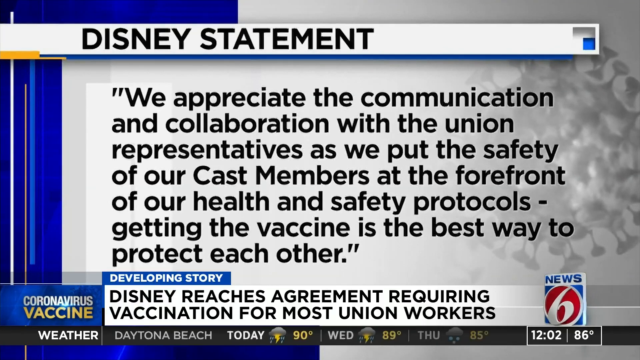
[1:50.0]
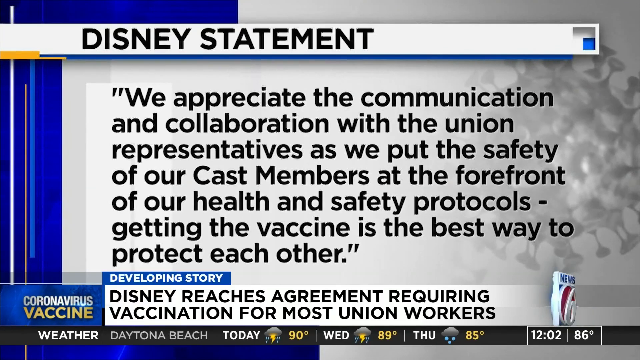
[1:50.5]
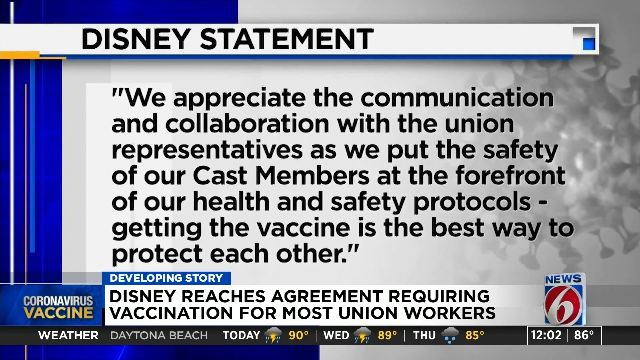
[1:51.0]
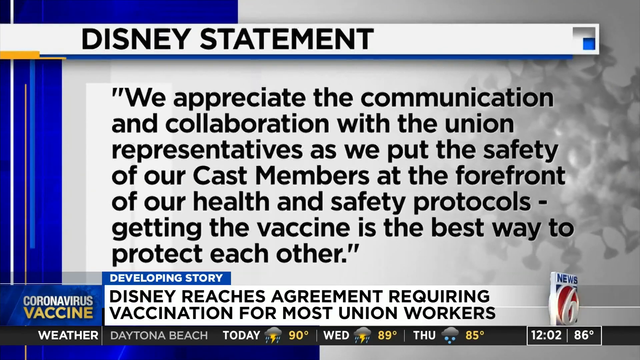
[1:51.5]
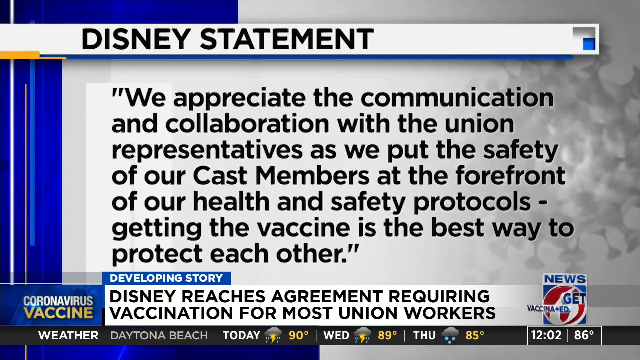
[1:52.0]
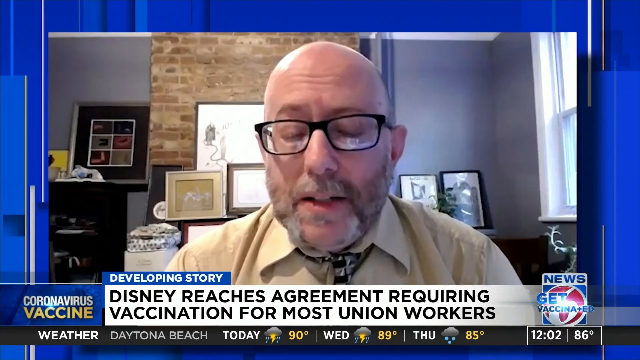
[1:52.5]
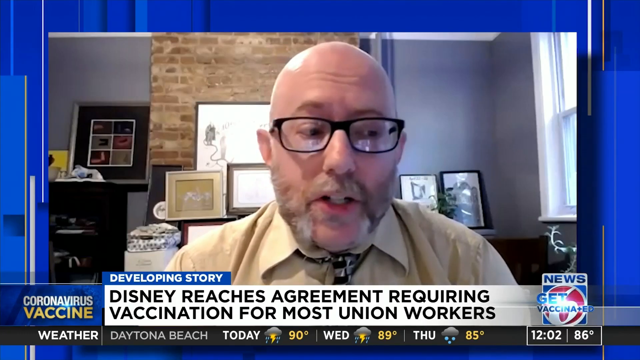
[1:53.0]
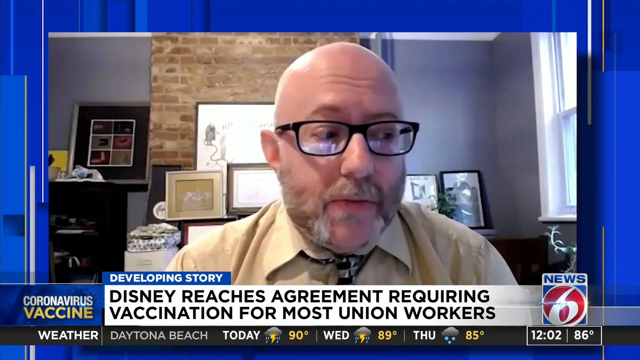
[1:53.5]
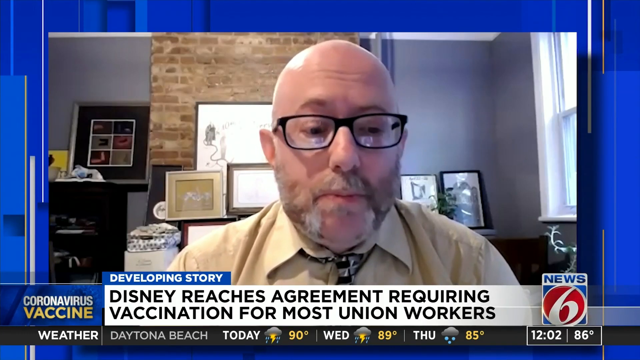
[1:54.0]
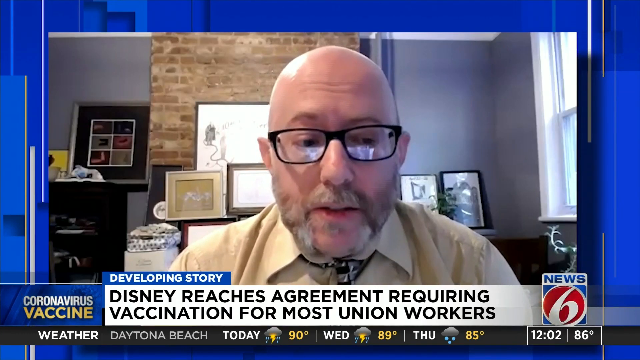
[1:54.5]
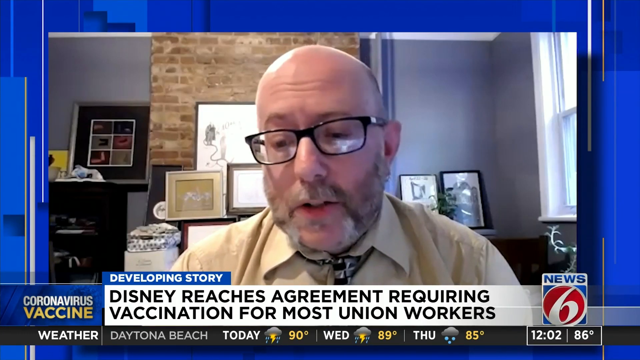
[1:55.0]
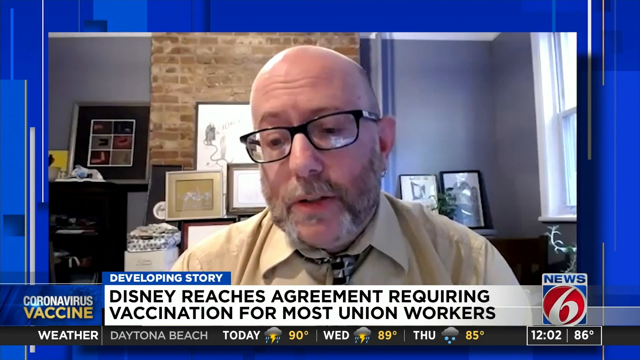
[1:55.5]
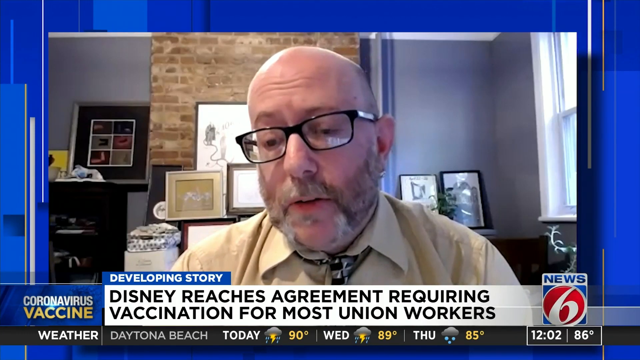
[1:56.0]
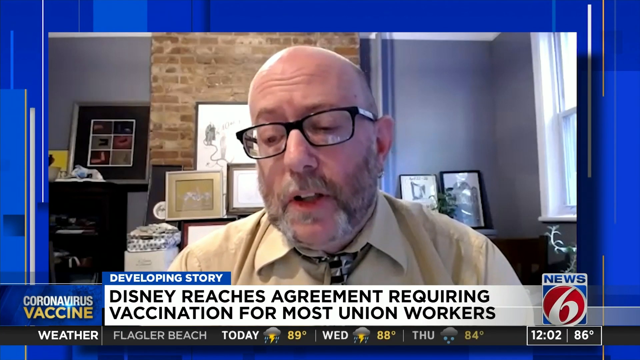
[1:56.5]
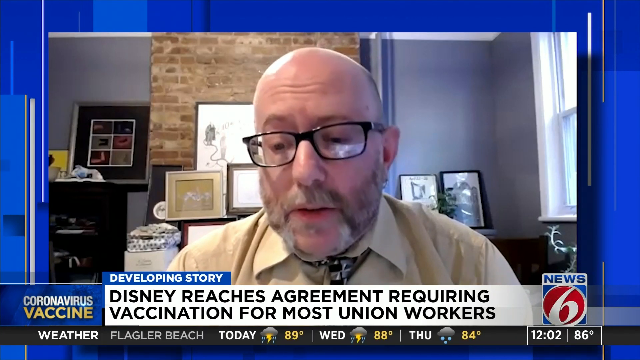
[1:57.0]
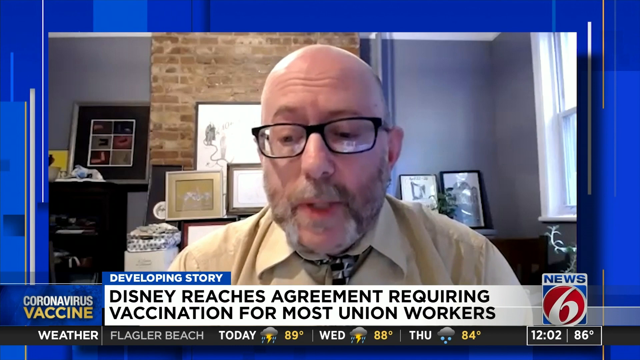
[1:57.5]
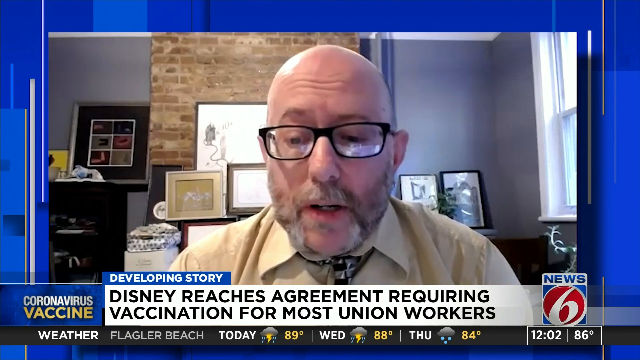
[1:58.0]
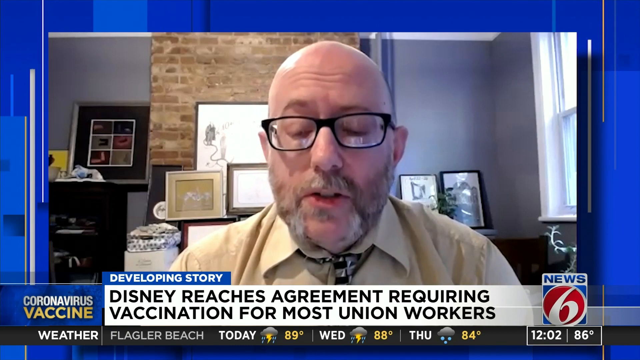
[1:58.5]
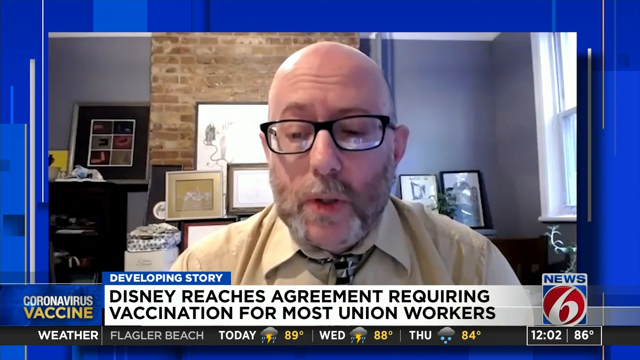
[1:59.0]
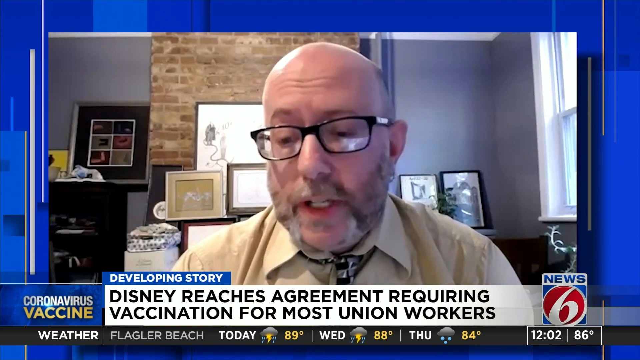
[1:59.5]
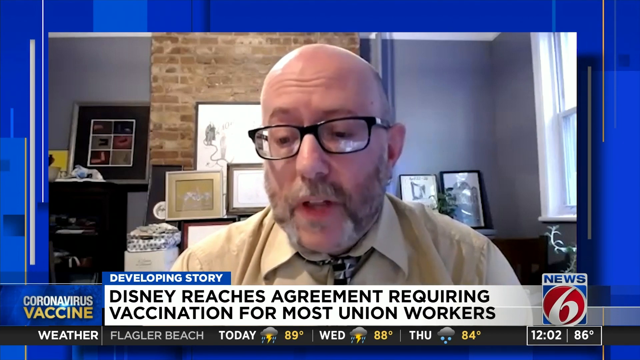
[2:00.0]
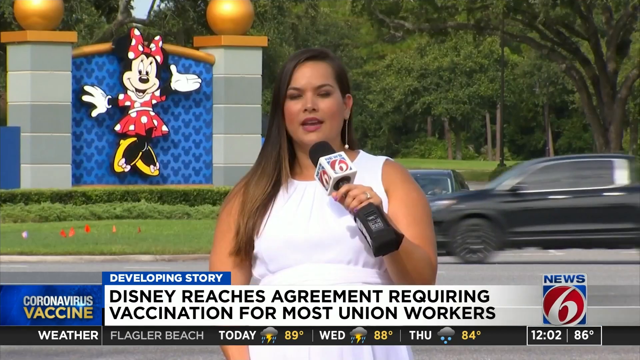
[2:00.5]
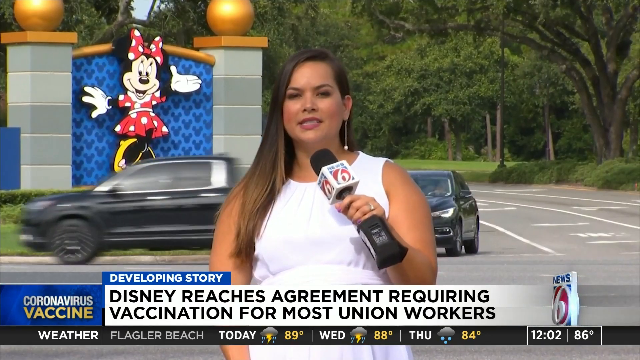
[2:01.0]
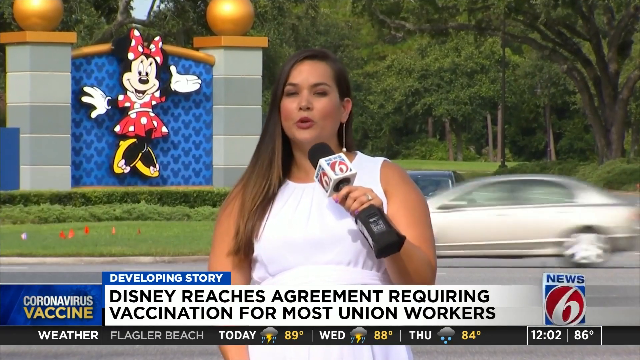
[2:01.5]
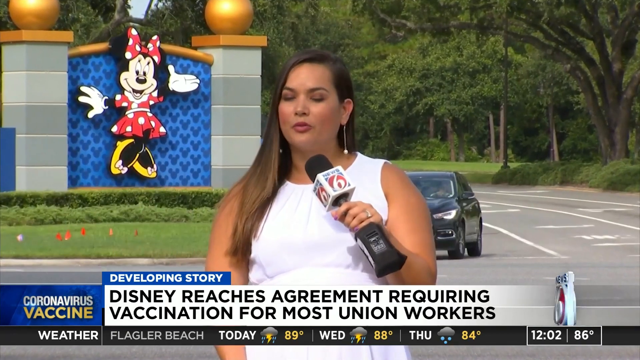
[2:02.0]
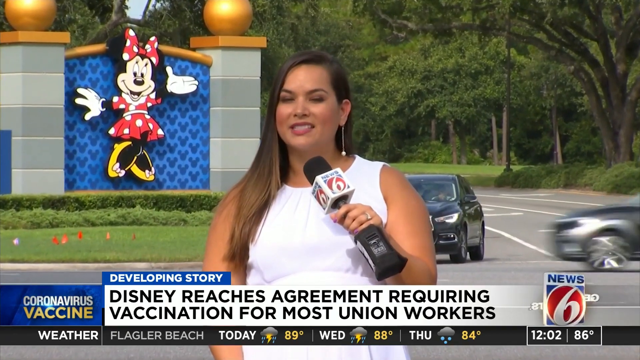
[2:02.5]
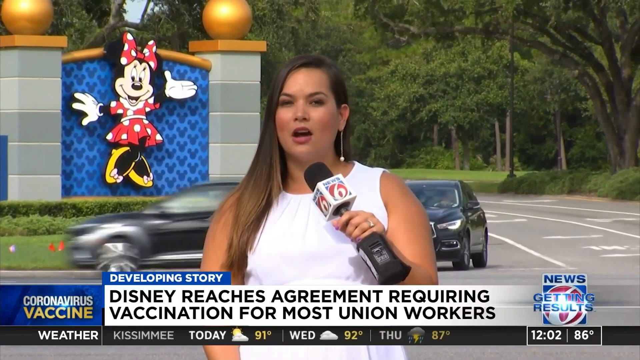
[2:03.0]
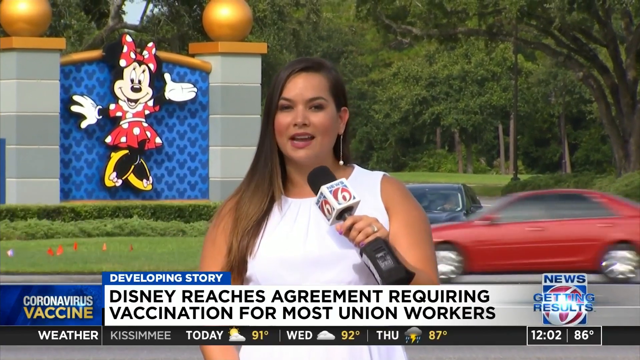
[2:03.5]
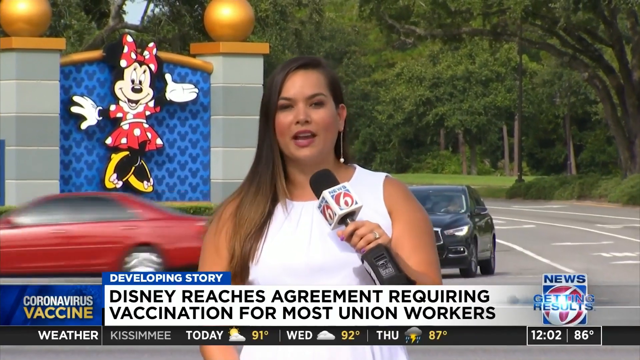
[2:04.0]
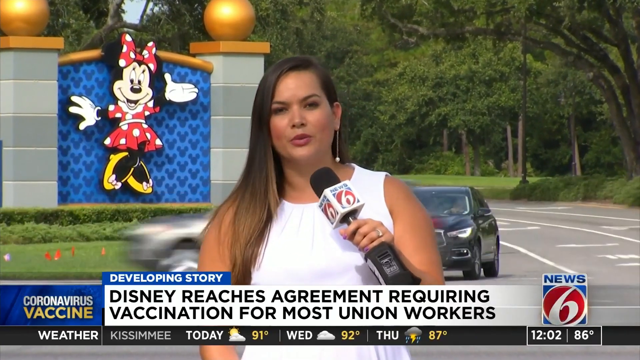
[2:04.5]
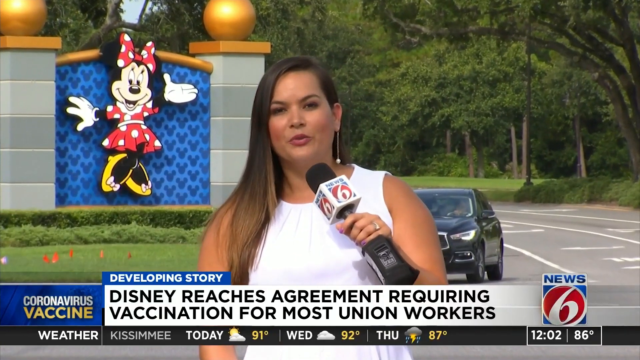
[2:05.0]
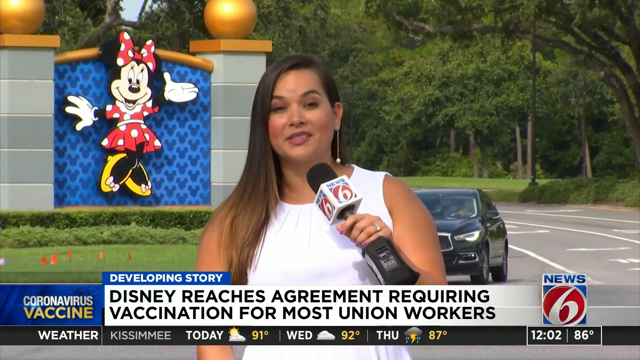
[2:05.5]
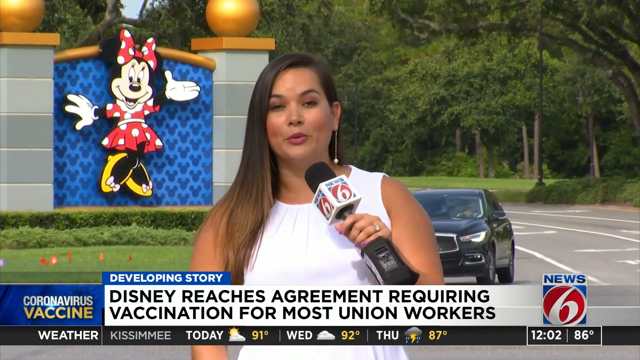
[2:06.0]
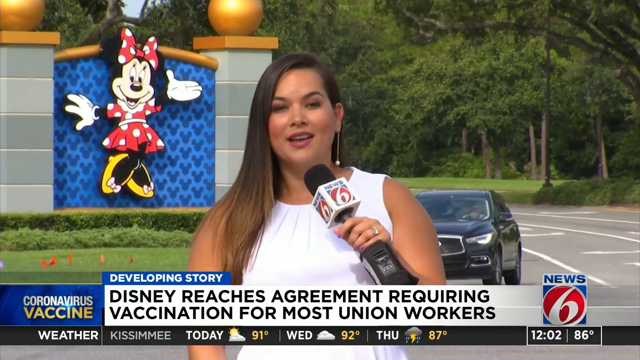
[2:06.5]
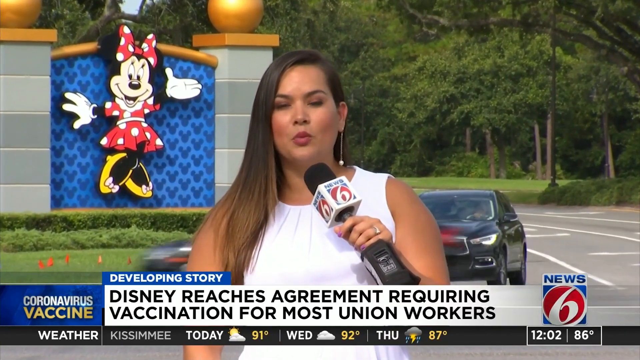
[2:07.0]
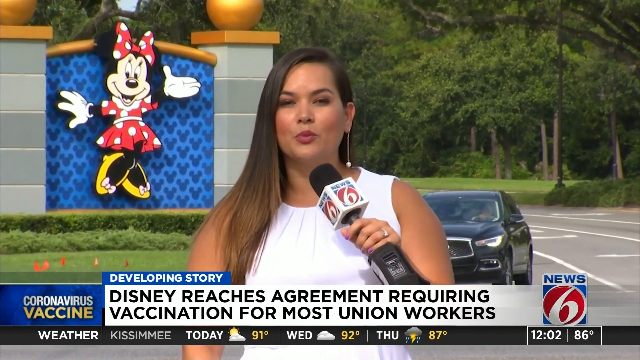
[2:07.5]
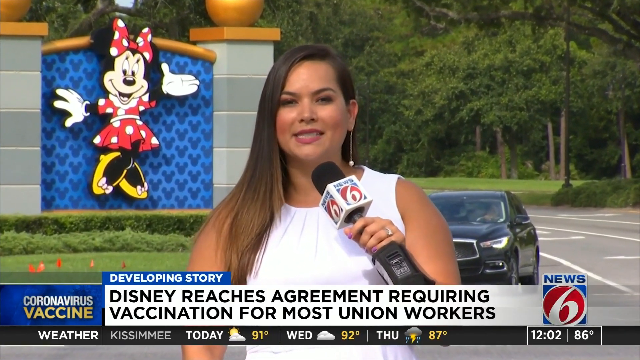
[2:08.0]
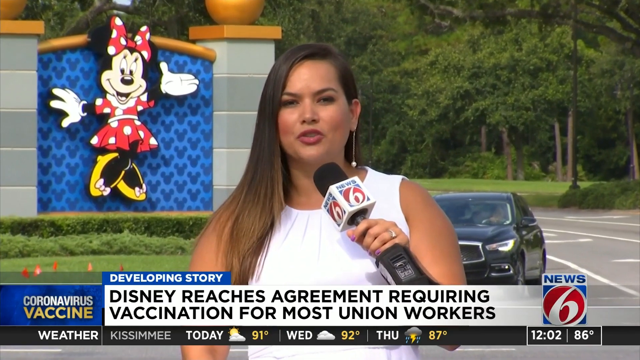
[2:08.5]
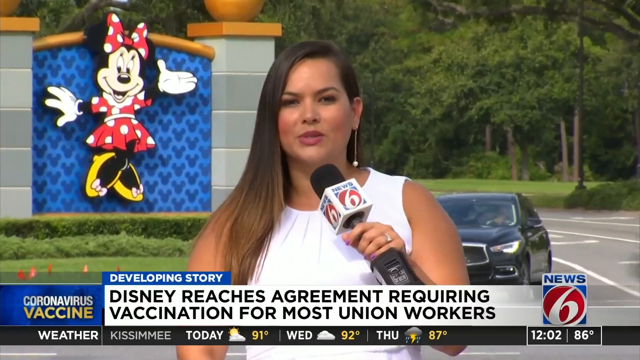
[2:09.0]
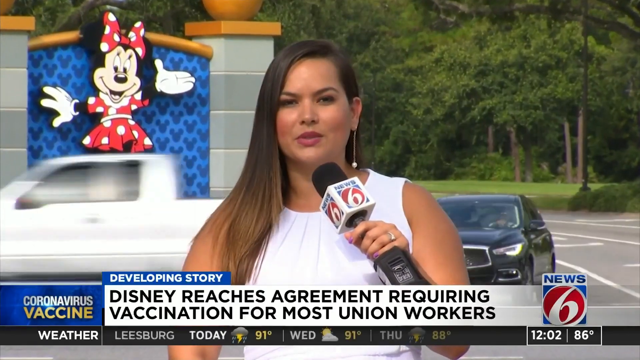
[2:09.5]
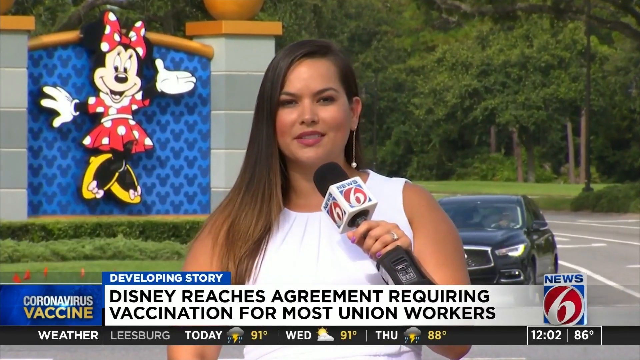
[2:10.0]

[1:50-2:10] The statement from Disney continues on screen. Then another man speaks about the story: he is bald with a goatee and a beard and wears a light yellow button-down shirt and a tie, and he looks like he is talking from an office. The video then cuts back to the newscaster, who is out on the street in front of the large Disney World sign, speaking to the camera as cars go by on the road.